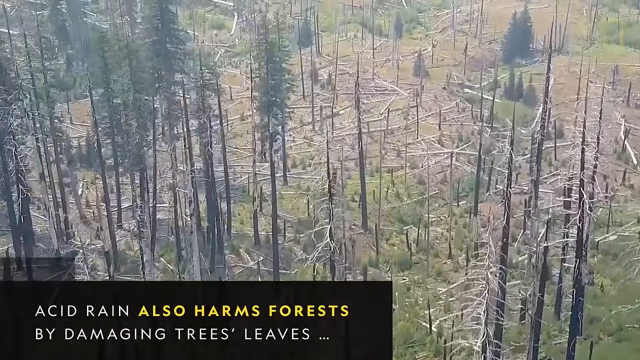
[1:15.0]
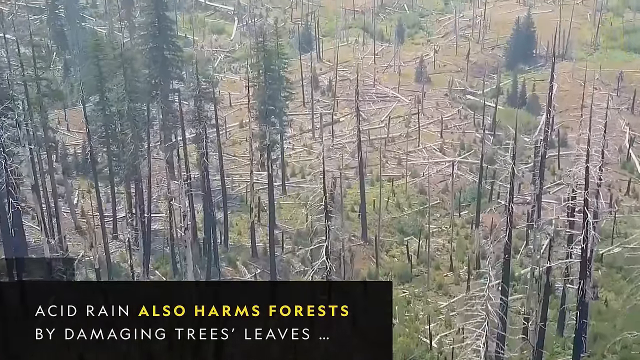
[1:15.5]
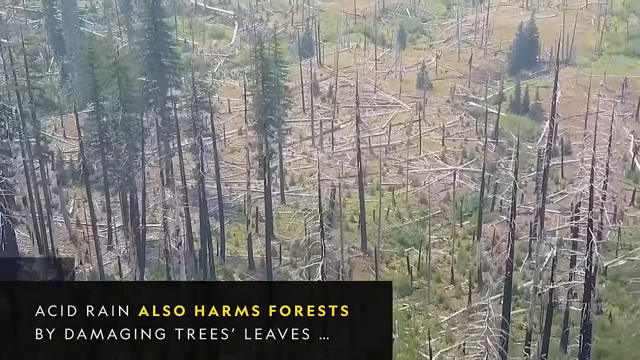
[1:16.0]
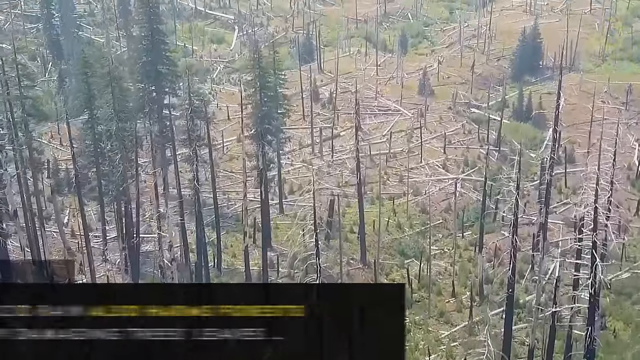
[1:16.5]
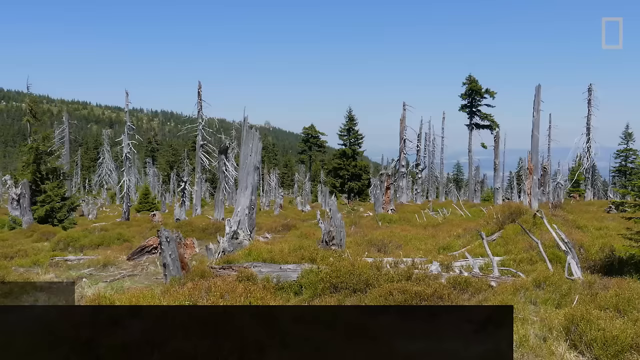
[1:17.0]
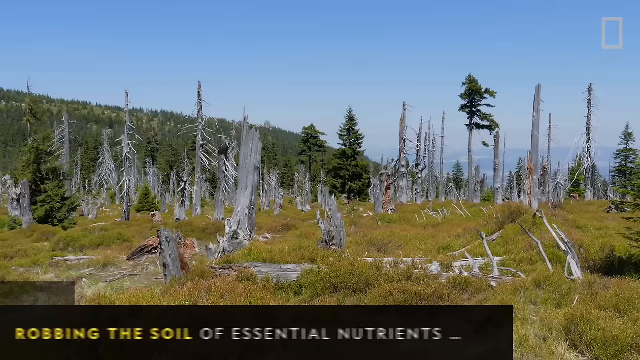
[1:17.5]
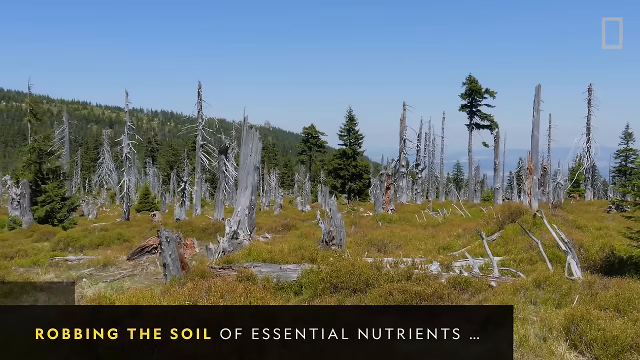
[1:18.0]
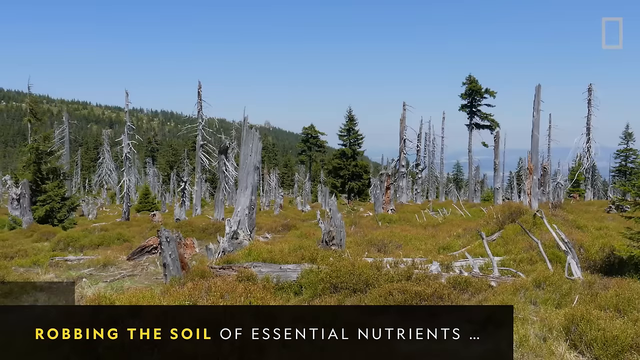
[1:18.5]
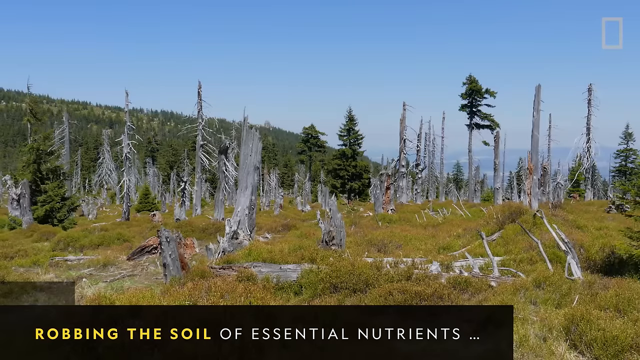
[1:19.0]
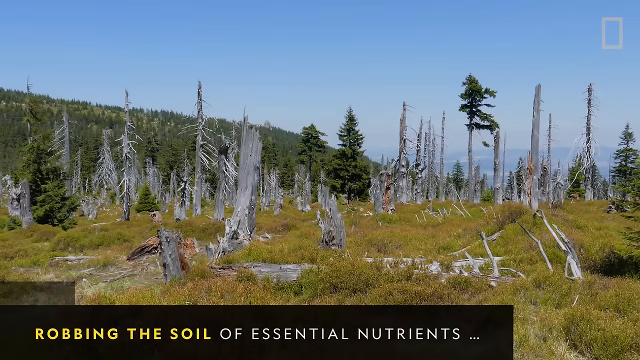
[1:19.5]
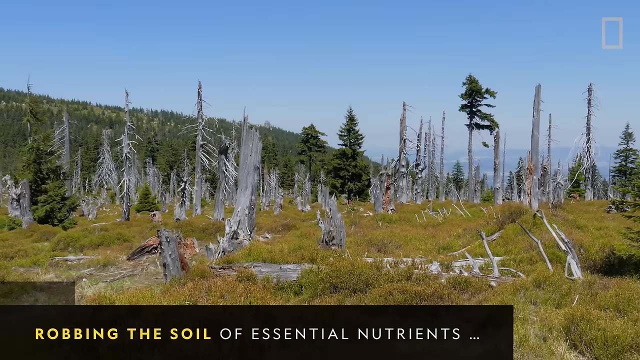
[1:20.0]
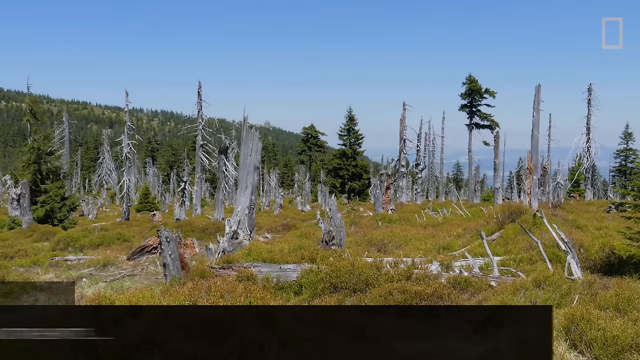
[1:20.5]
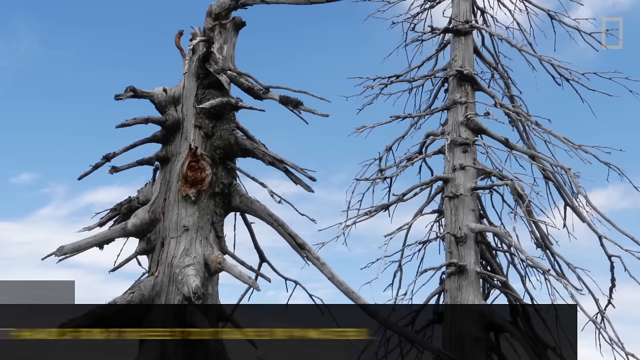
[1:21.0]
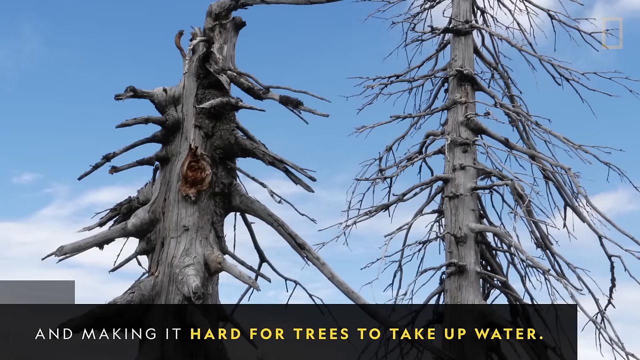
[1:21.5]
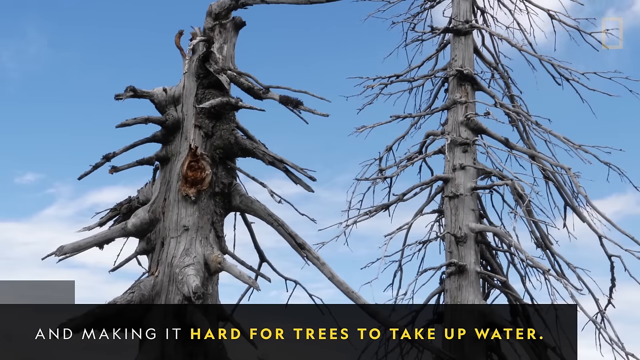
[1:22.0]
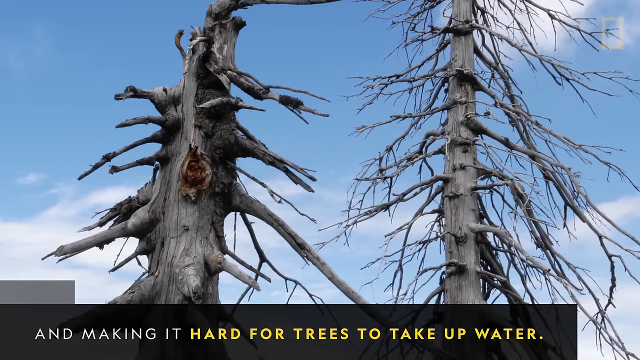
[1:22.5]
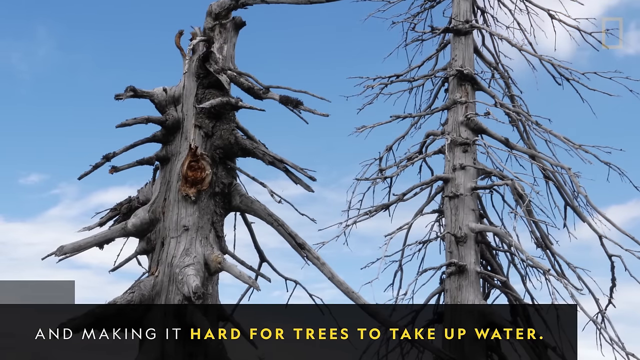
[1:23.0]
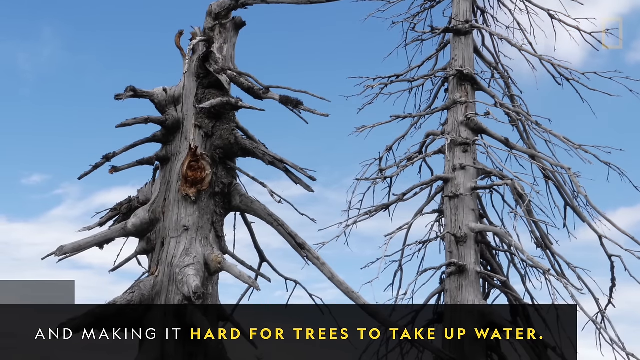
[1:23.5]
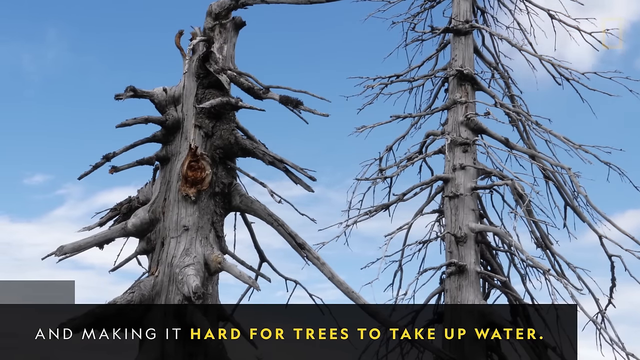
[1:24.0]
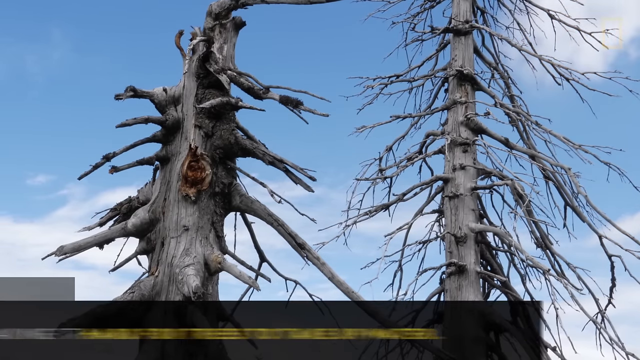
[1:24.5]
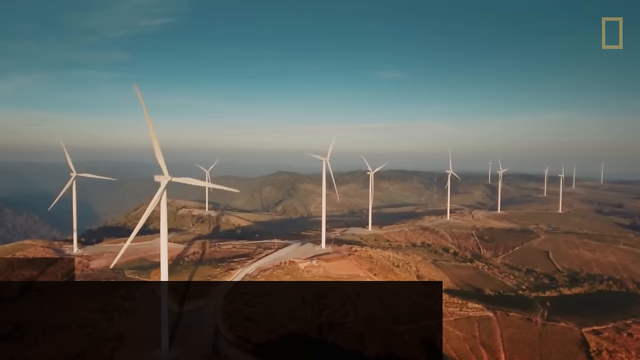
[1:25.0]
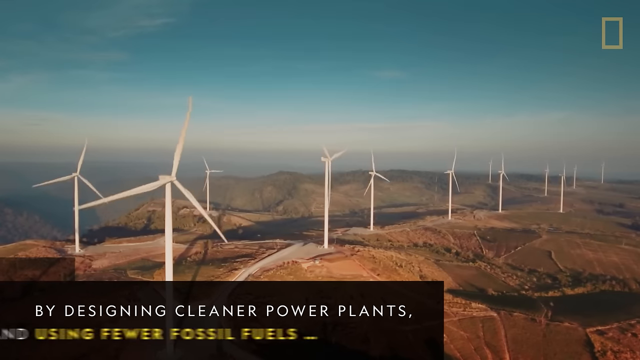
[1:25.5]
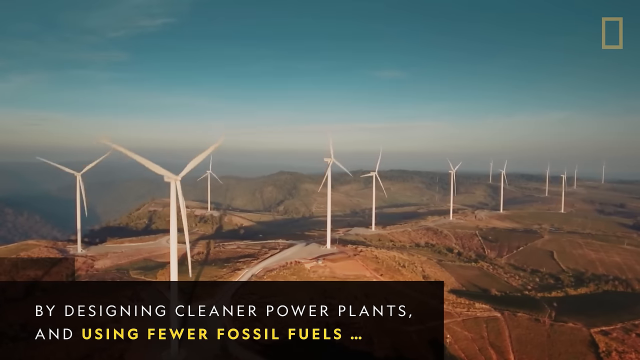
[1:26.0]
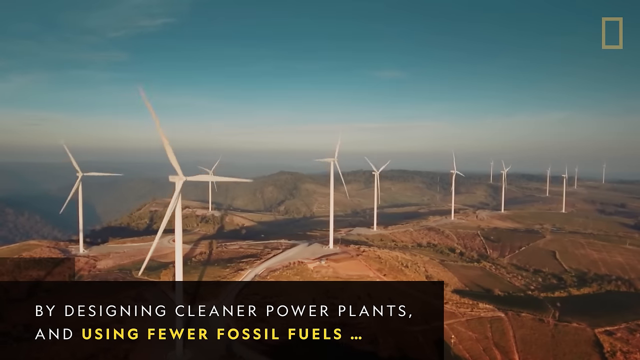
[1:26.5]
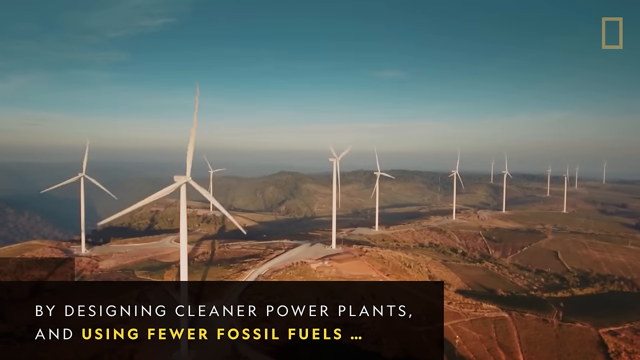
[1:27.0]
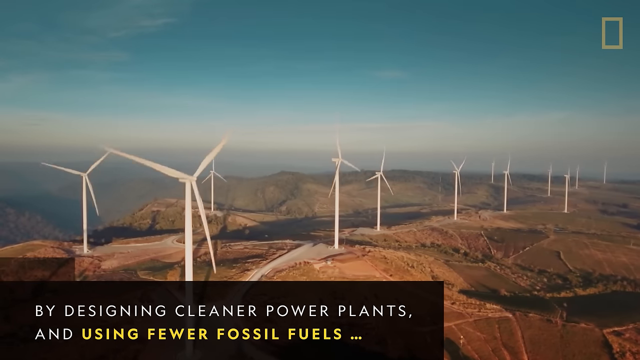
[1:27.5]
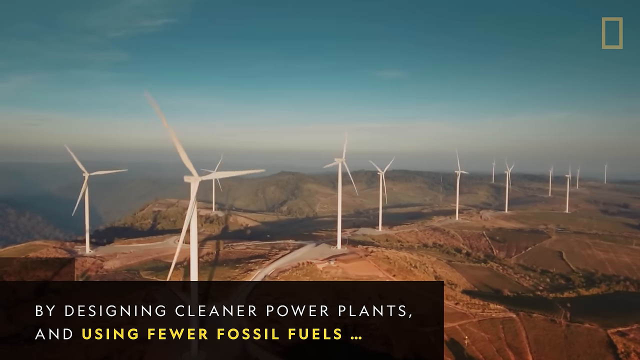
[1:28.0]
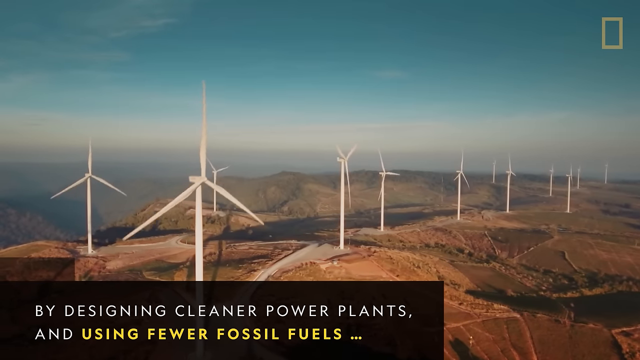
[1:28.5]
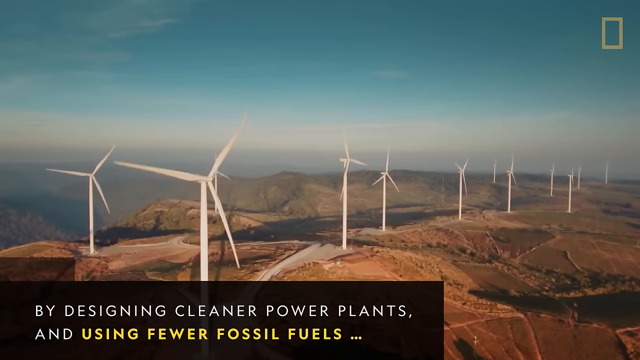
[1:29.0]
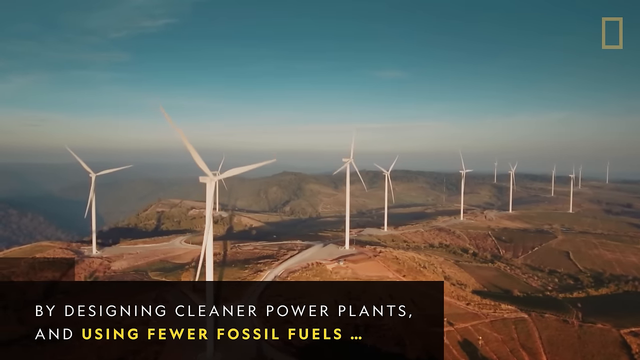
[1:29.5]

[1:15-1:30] Badly decimated forests with dead trees appear, along with windmills. Text states that acid rain harms forests by robbing the soil of essential nutrients, and words at the bottom mention soil erosion.